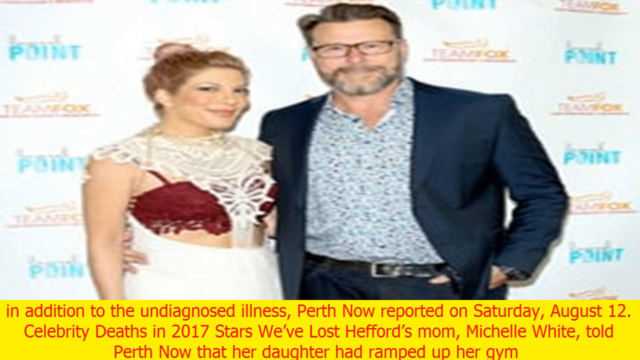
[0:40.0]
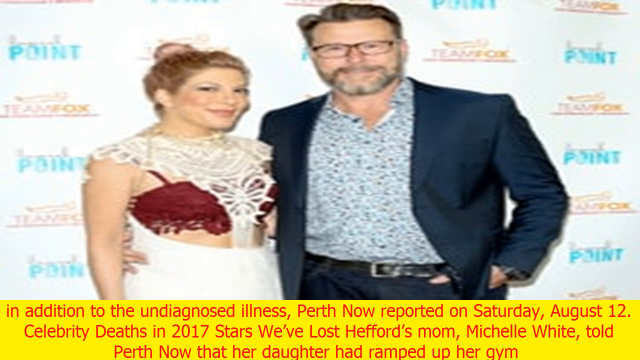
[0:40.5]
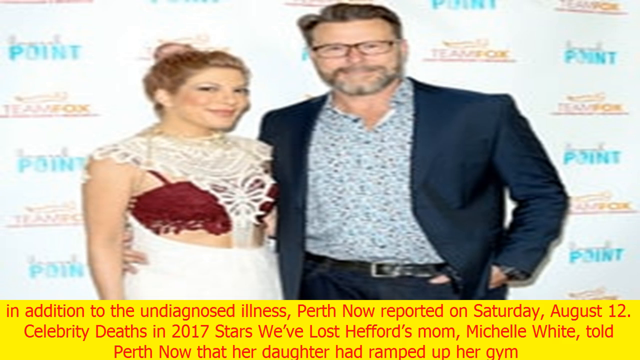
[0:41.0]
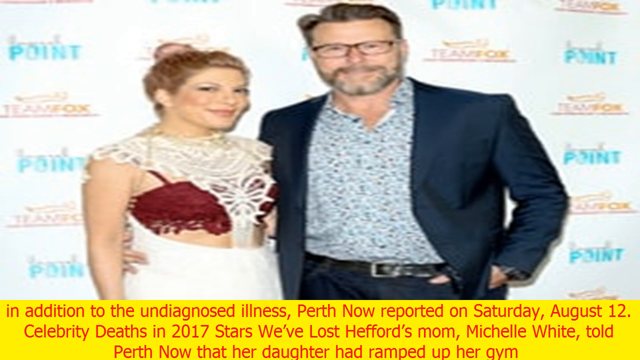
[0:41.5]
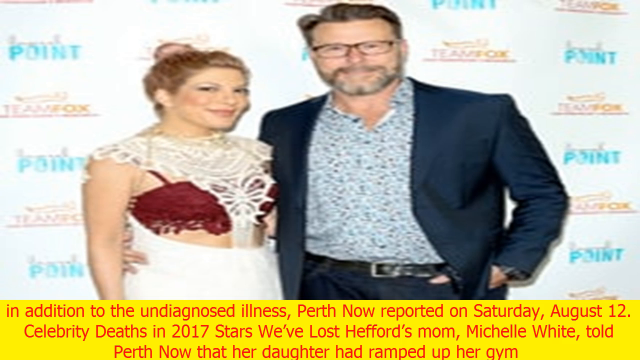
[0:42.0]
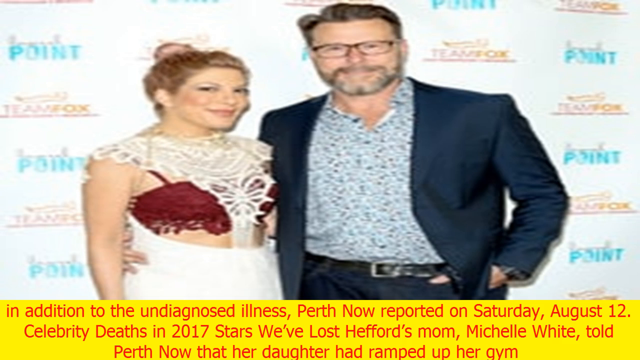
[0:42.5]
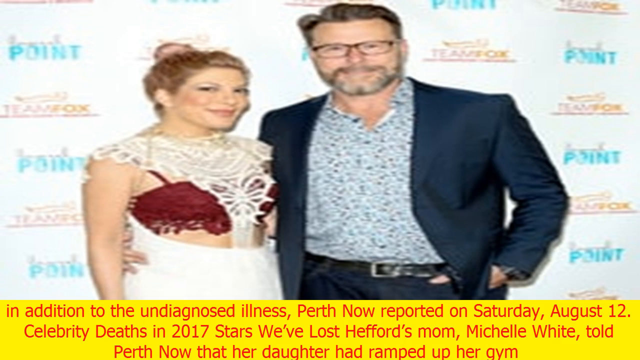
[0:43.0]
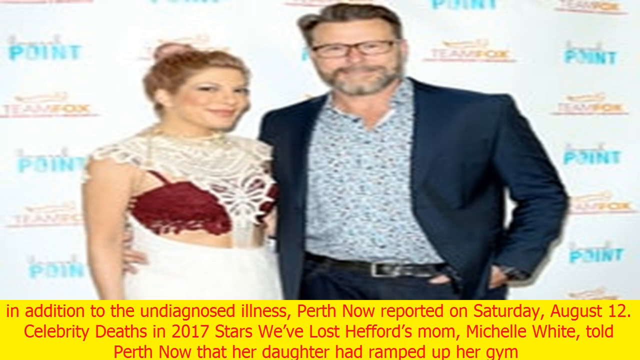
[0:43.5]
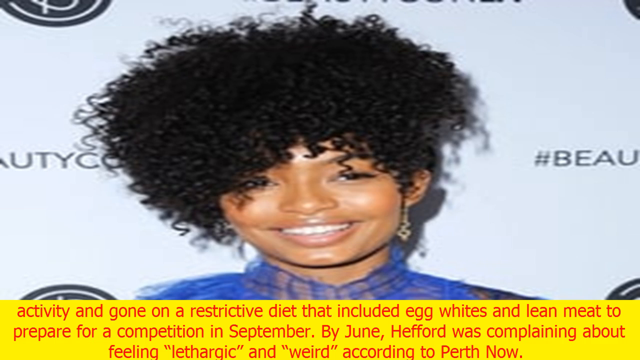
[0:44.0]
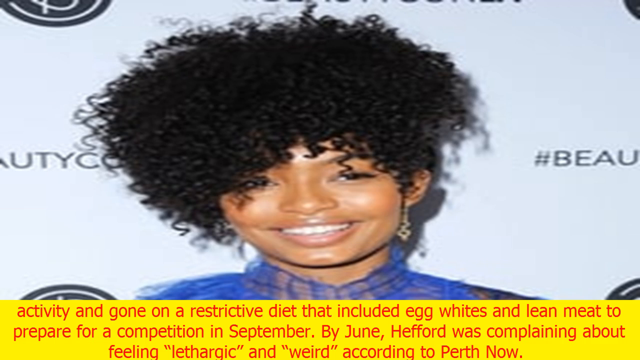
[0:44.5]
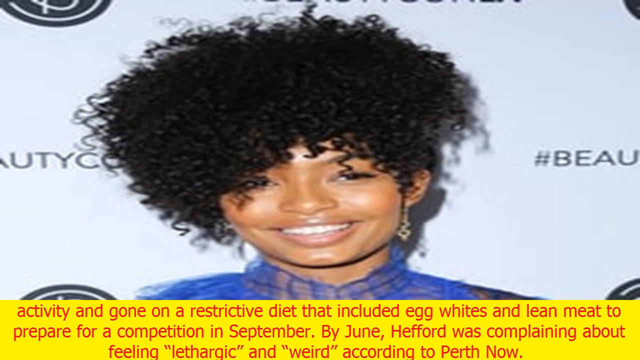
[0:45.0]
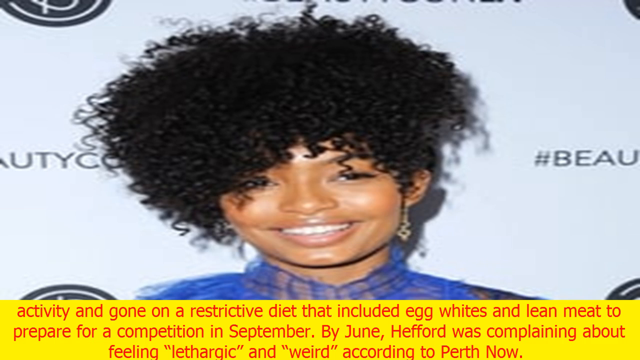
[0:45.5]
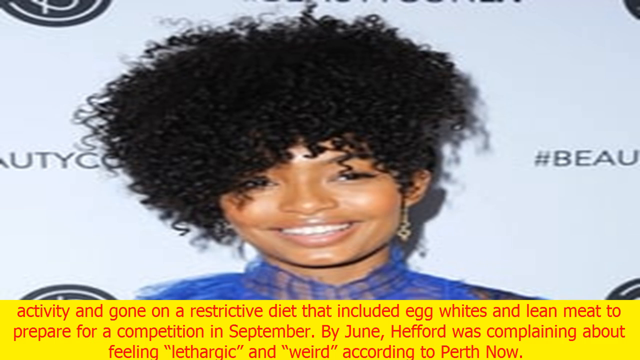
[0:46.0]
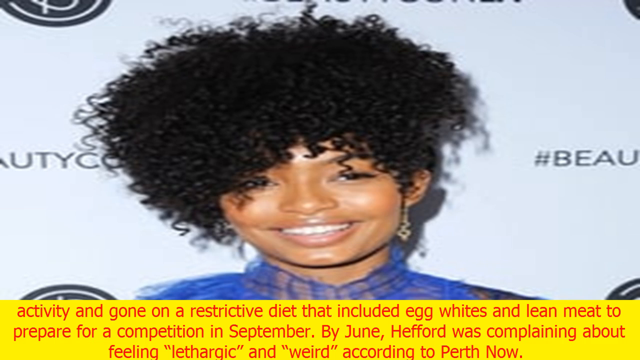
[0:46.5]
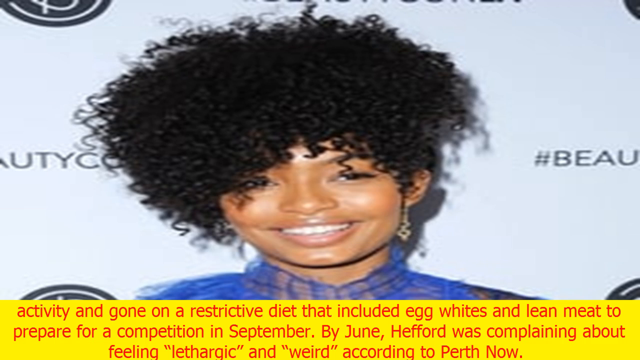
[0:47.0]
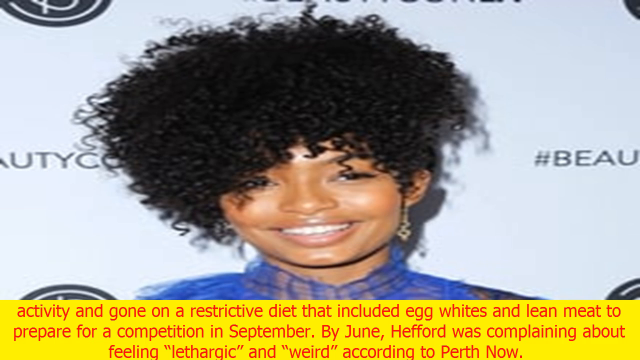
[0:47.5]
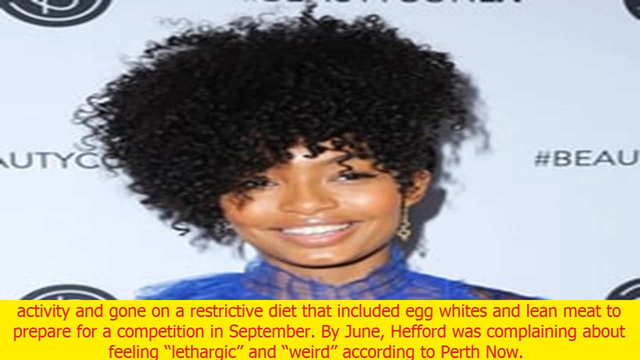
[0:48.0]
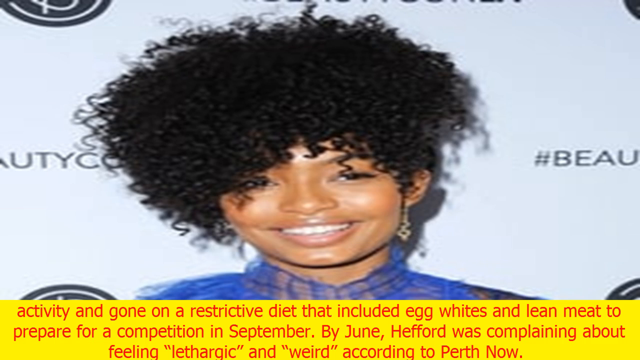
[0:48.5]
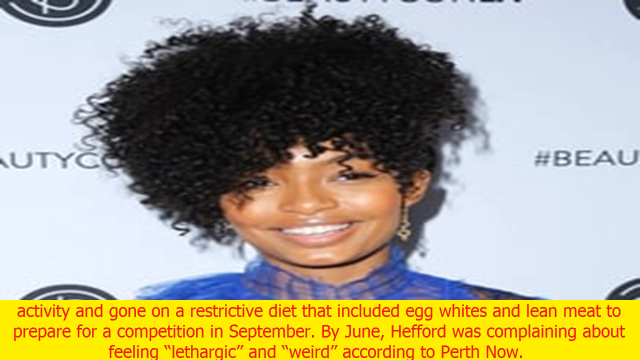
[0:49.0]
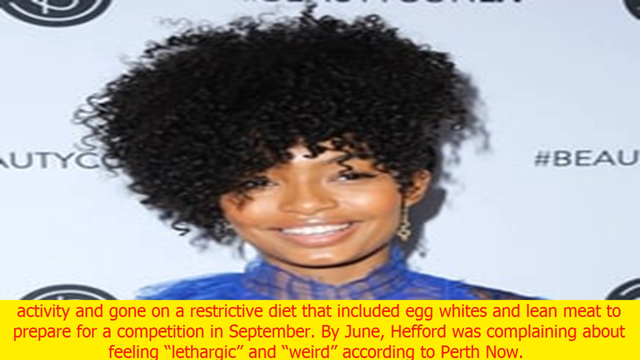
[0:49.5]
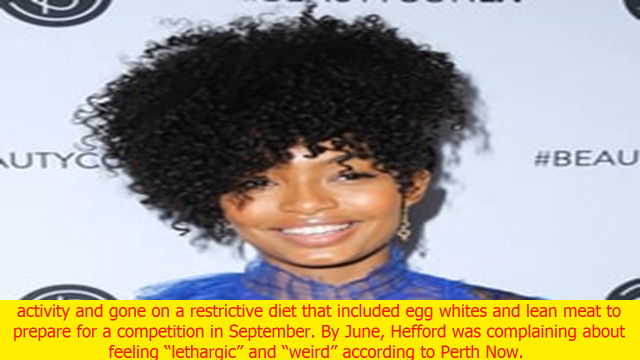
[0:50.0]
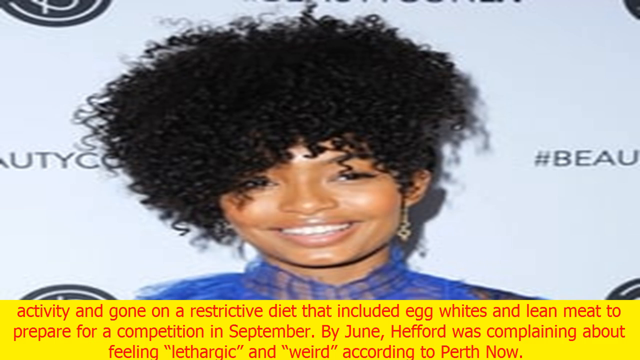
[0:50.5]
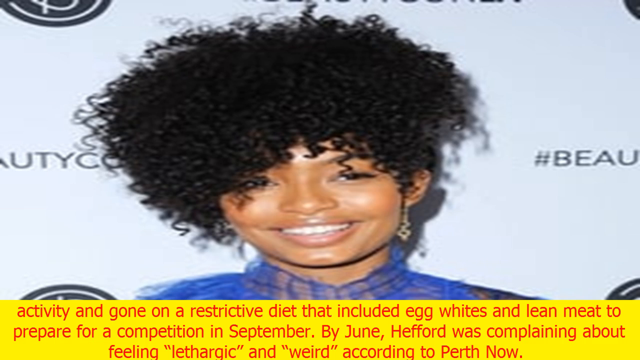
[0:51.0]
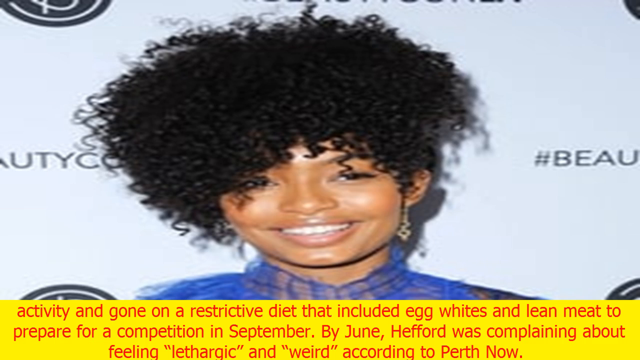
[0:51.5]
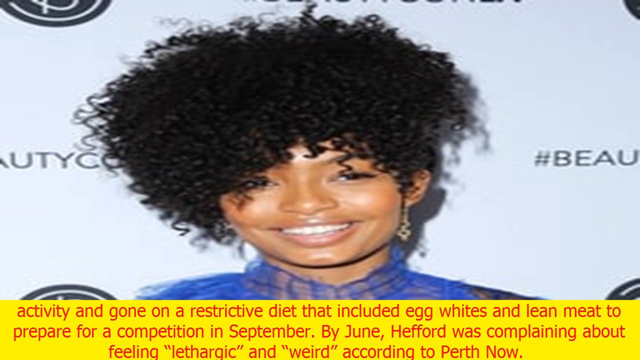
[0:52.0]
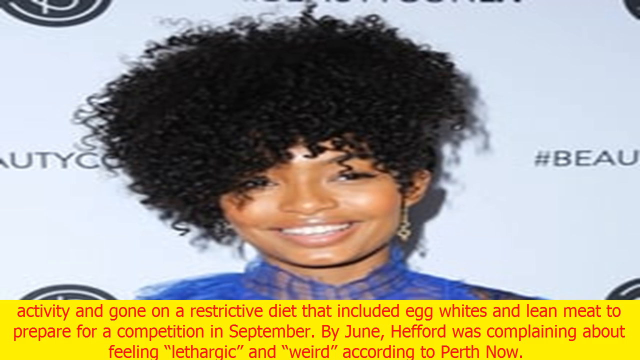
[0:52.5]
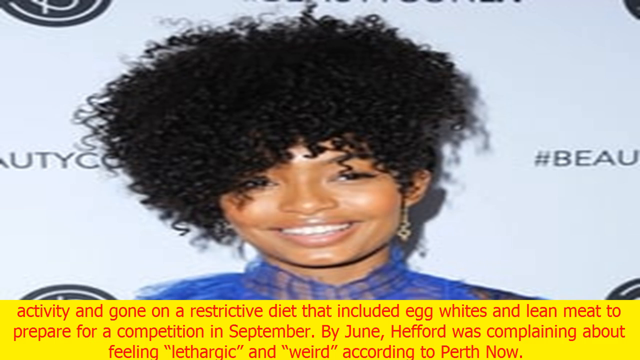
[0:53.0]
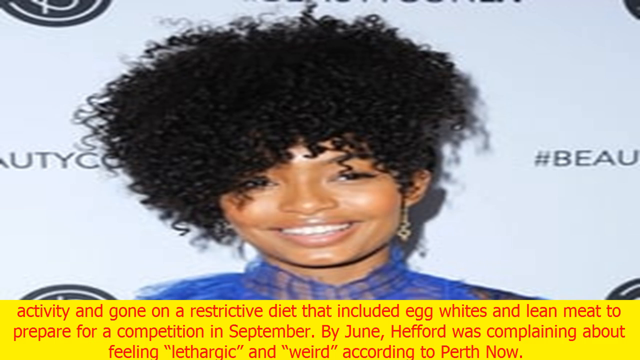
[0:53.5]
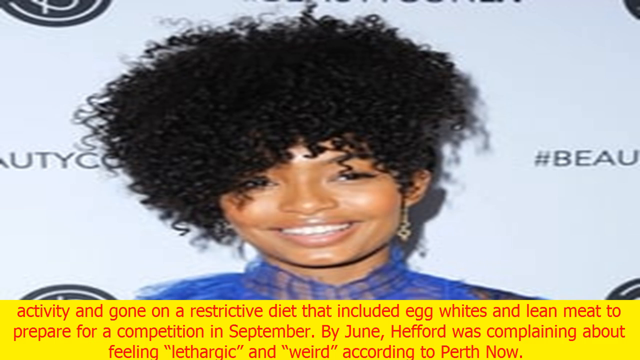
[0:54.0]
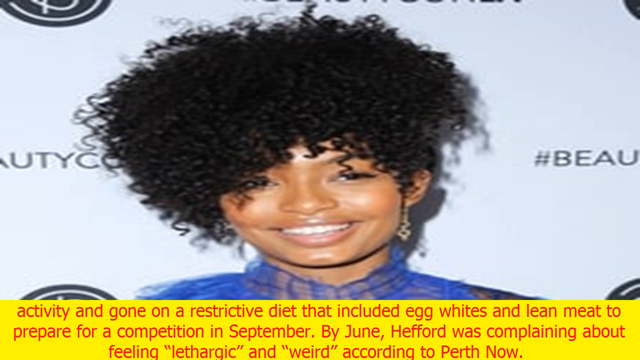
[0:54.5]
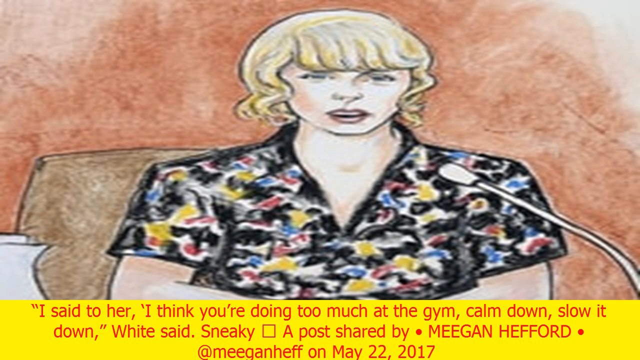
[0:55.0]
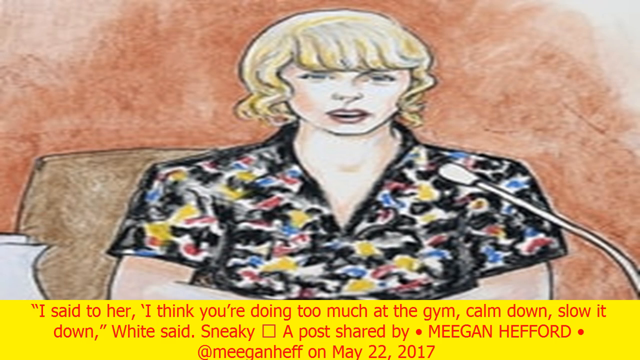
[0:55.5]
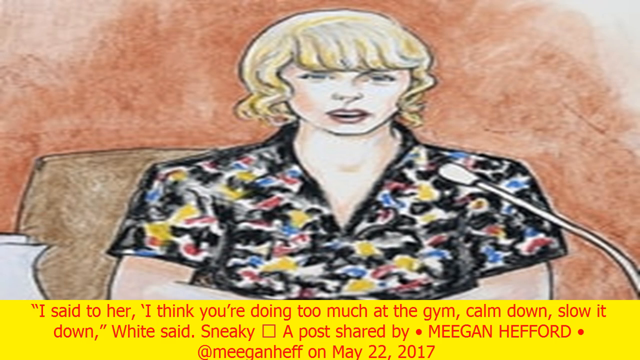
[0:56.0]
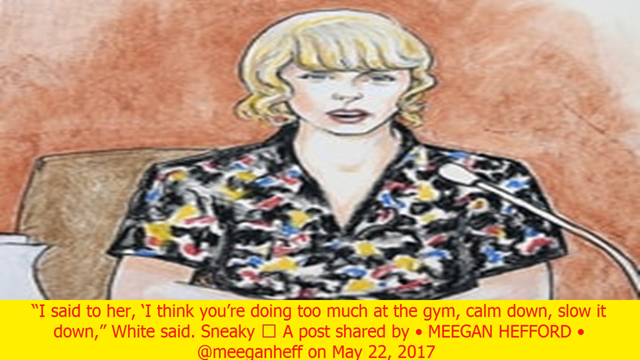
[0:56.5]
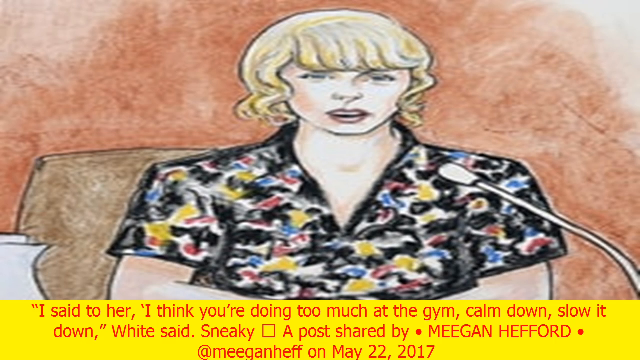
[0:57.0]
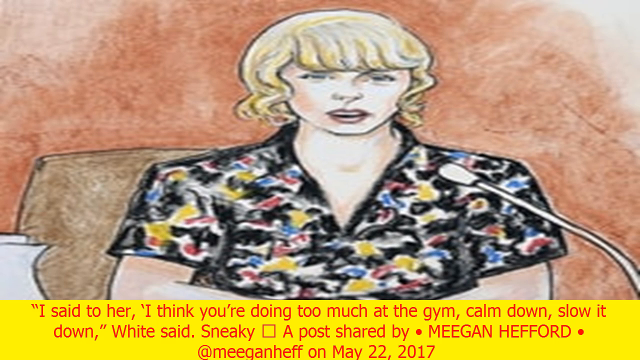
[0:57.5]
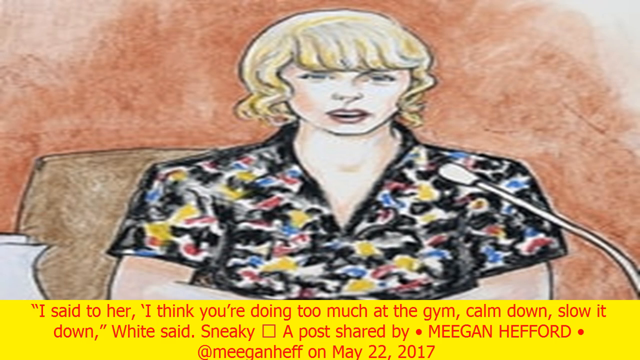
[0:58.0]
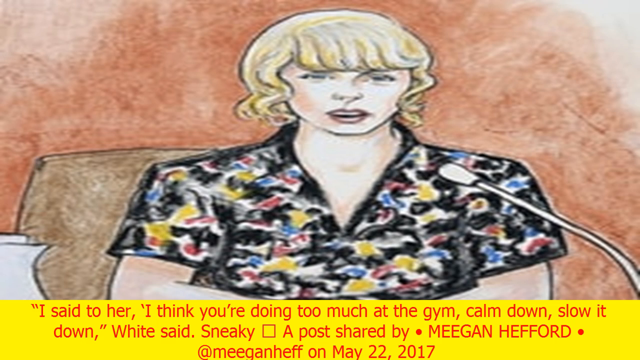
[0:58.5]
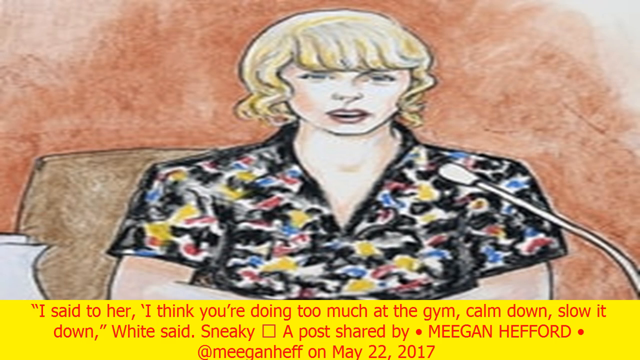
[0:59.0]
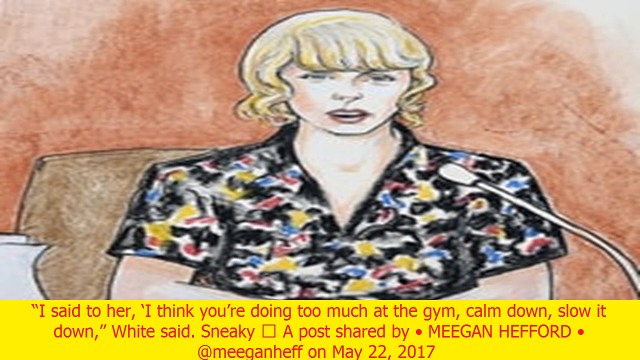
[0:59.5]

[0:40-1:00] The image of the two probably famous, elegant people continues. The man wears a blue jacket and a blue and white shirt, and the woman wears a very elegant white dress with a red bra or red top. Superimposed text describes what happened to the mother who died from taking too much protein. The celebrities are possibly connected to the story as people who suffered the same condition. Finally, a drawing appears of a woman with blonde hair in a black and coloured dress, speaking into a microphone, probably in a court. The superimposed text reads "I say to her, I think you're doing too much at the gym, calm down, slow it down."